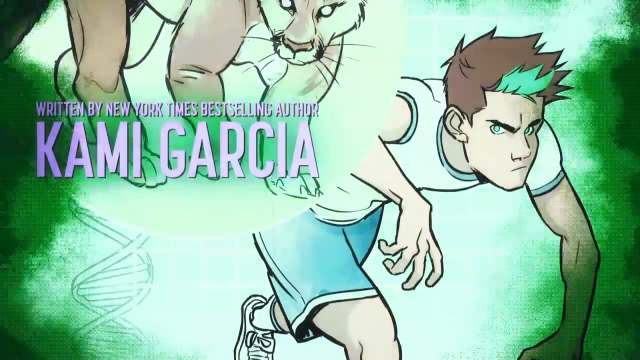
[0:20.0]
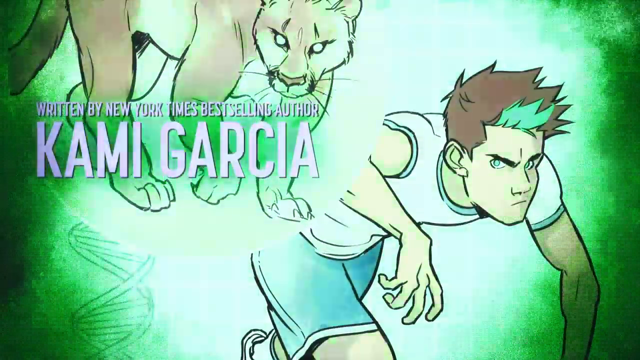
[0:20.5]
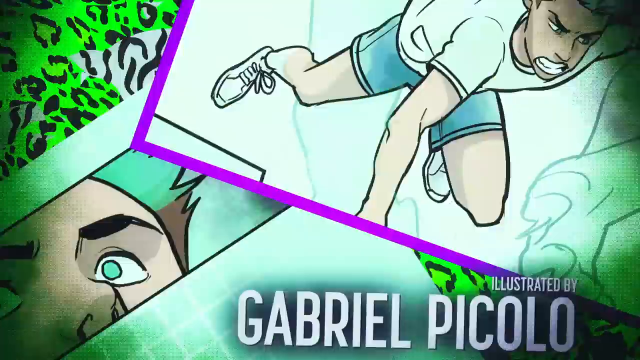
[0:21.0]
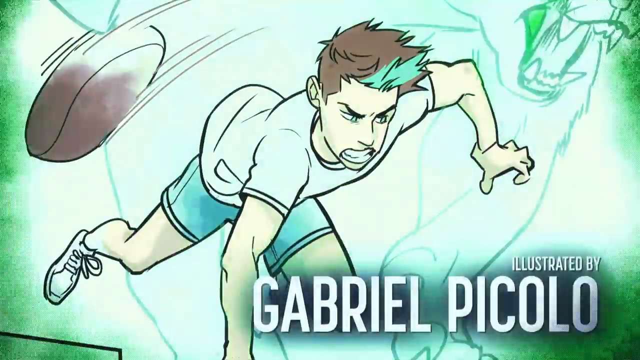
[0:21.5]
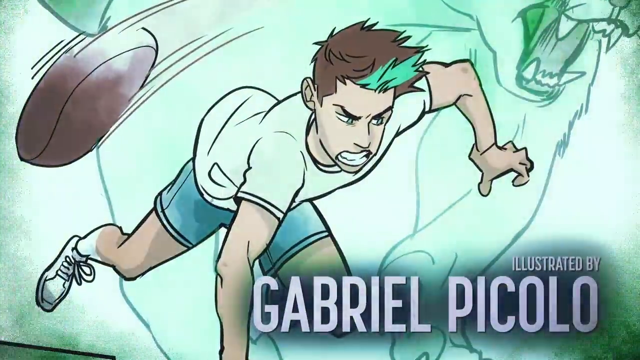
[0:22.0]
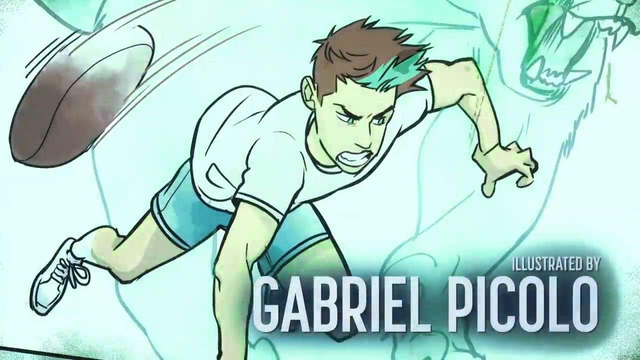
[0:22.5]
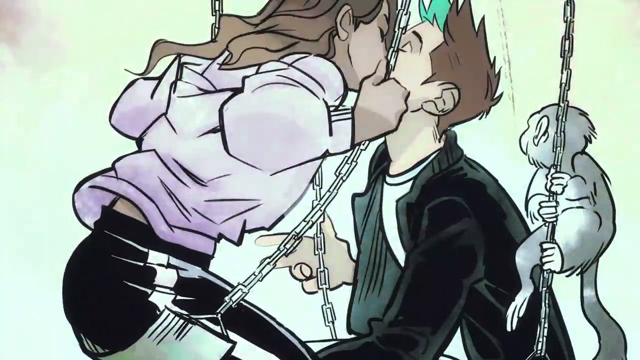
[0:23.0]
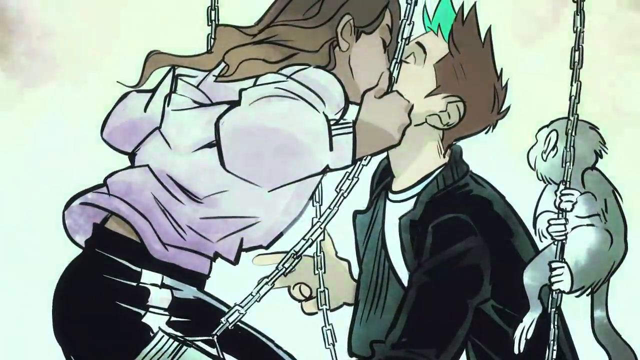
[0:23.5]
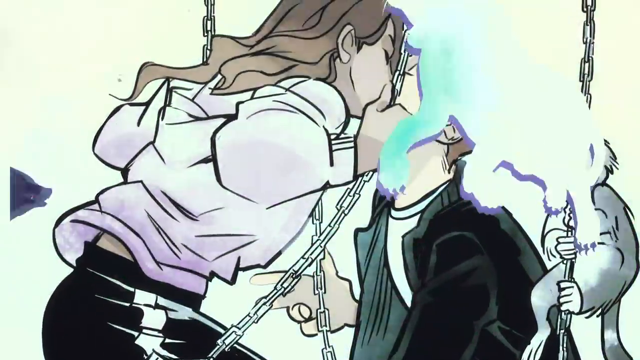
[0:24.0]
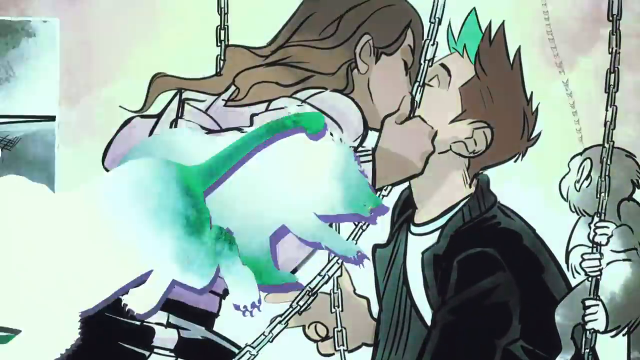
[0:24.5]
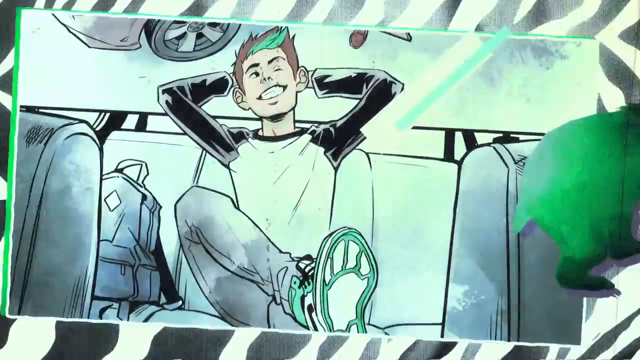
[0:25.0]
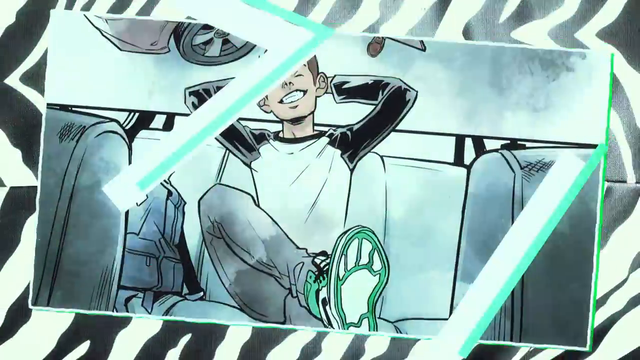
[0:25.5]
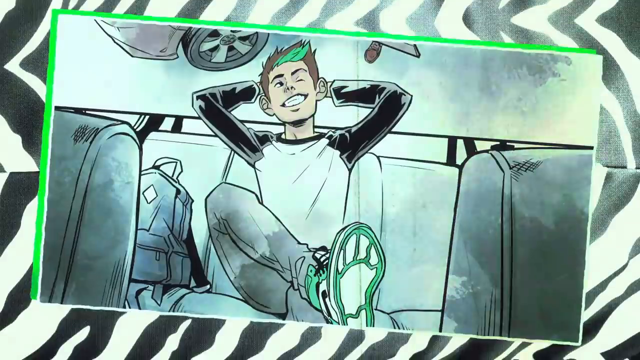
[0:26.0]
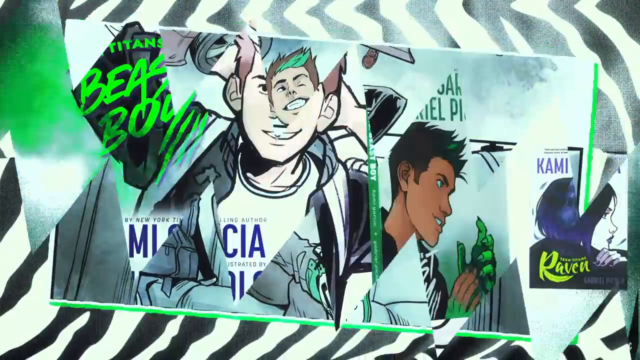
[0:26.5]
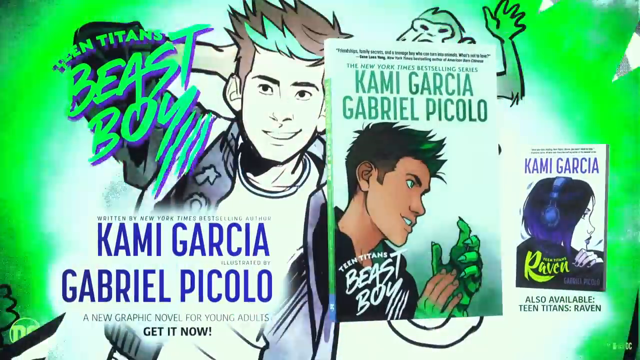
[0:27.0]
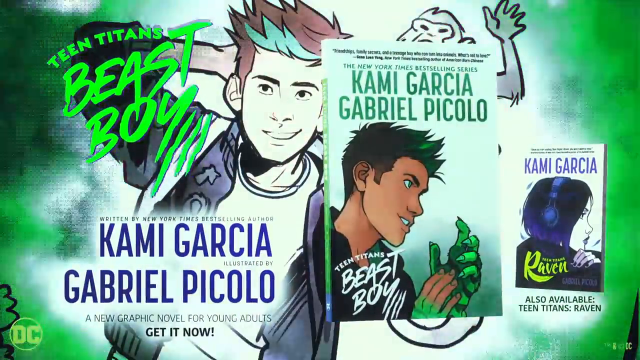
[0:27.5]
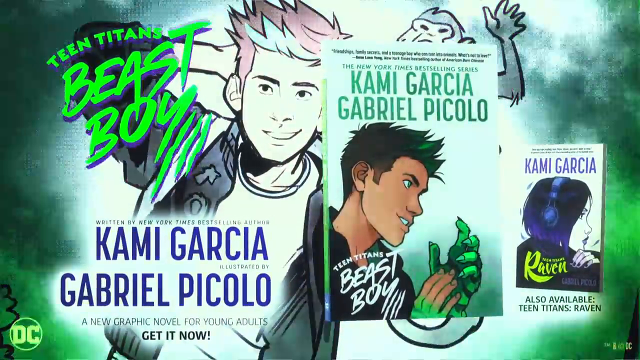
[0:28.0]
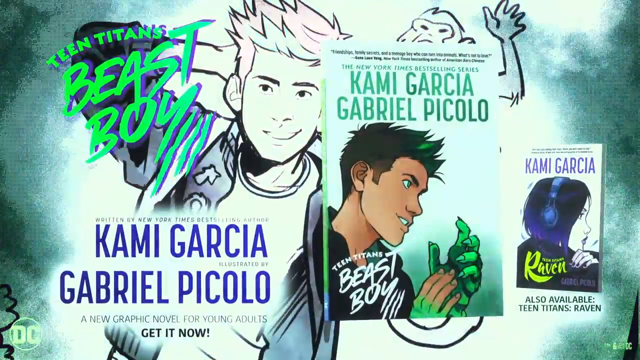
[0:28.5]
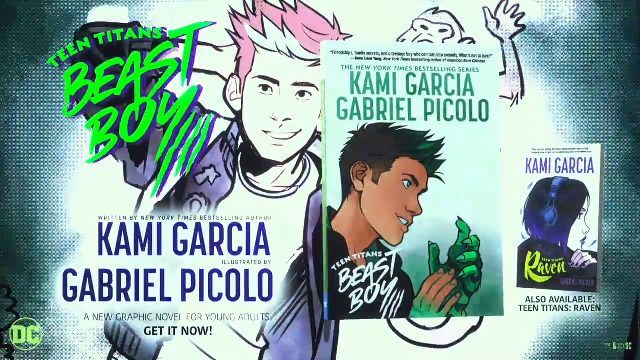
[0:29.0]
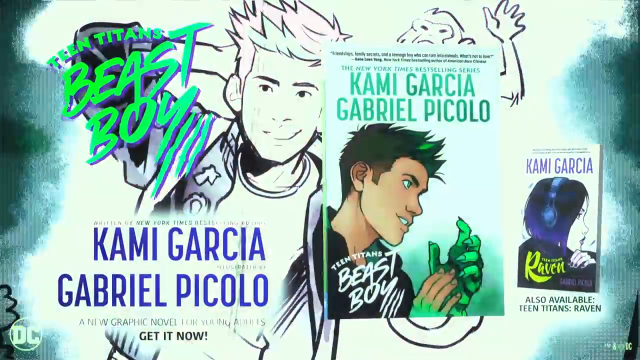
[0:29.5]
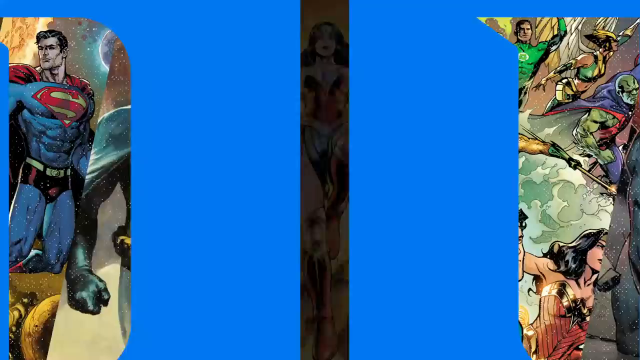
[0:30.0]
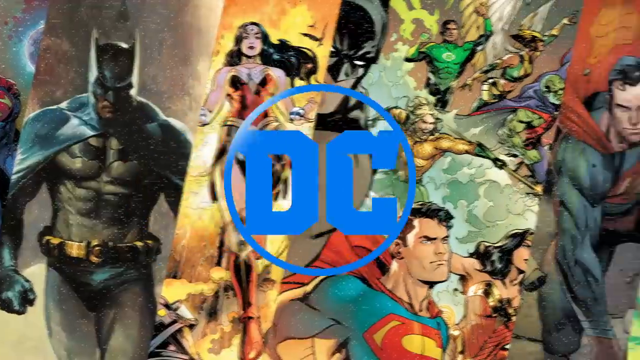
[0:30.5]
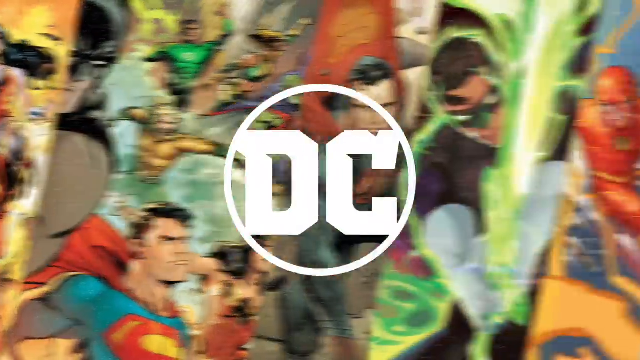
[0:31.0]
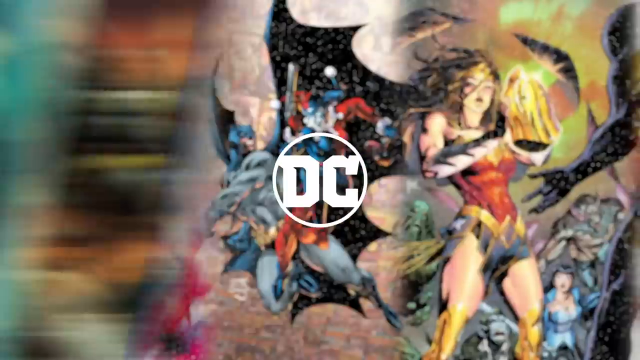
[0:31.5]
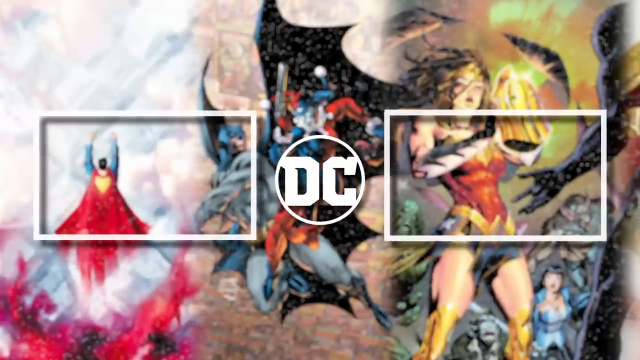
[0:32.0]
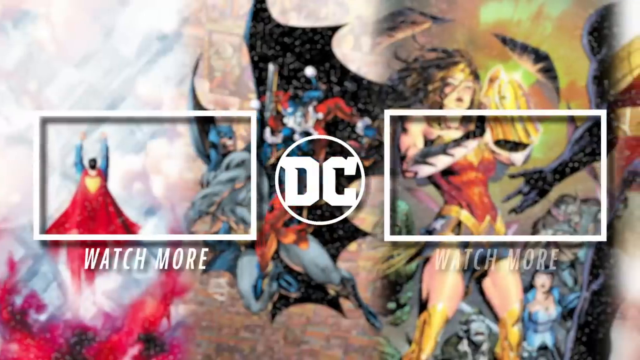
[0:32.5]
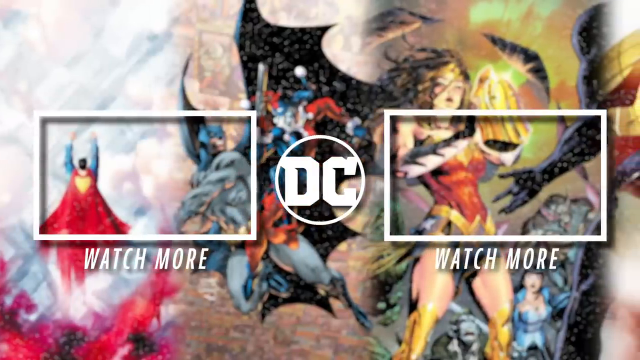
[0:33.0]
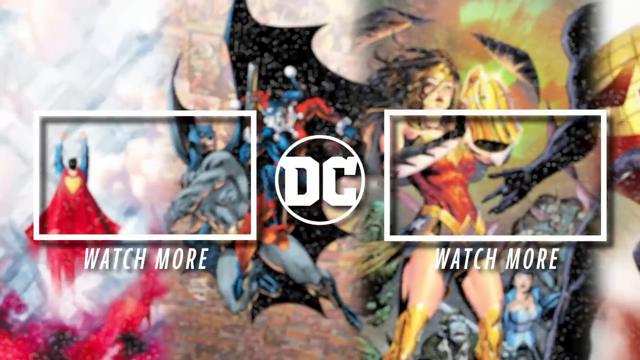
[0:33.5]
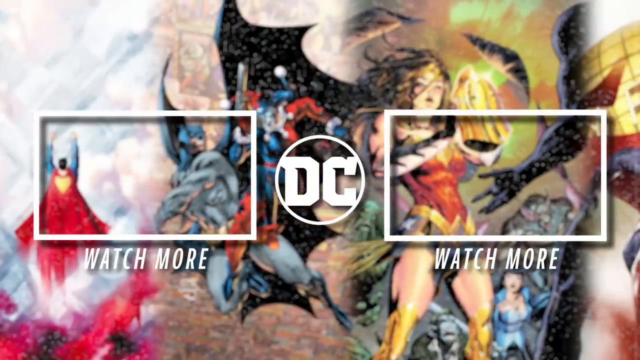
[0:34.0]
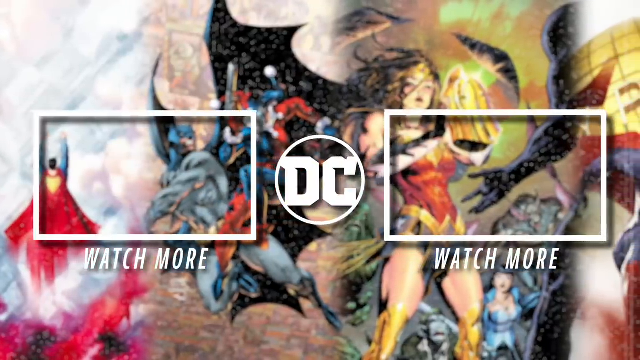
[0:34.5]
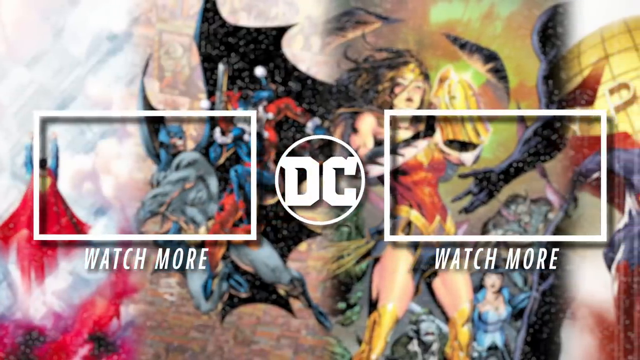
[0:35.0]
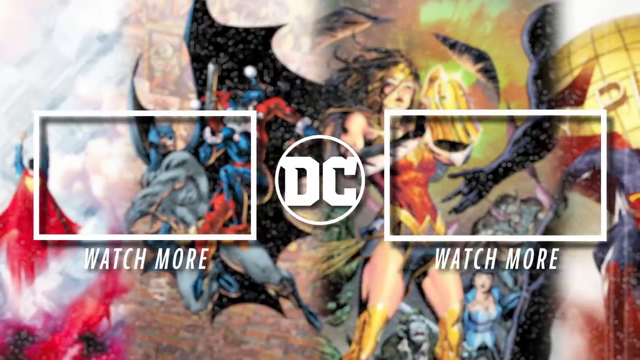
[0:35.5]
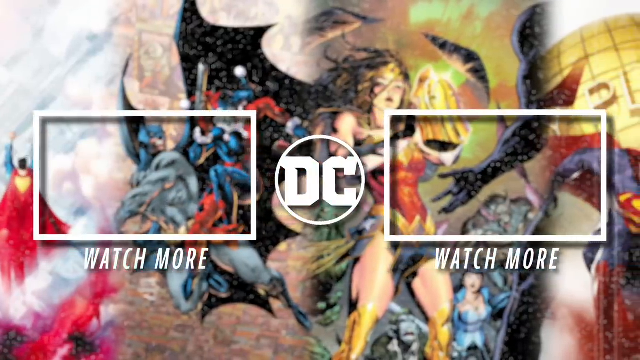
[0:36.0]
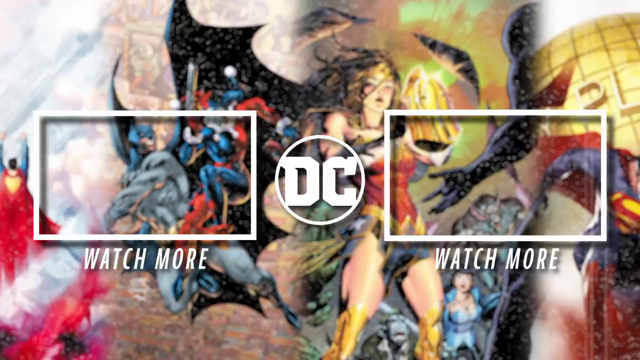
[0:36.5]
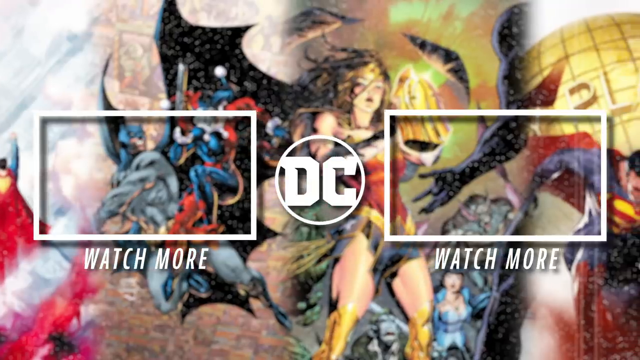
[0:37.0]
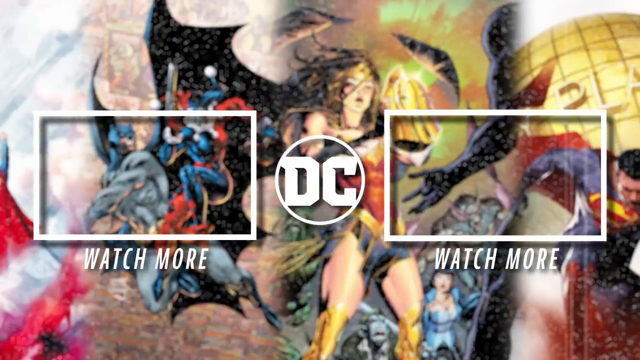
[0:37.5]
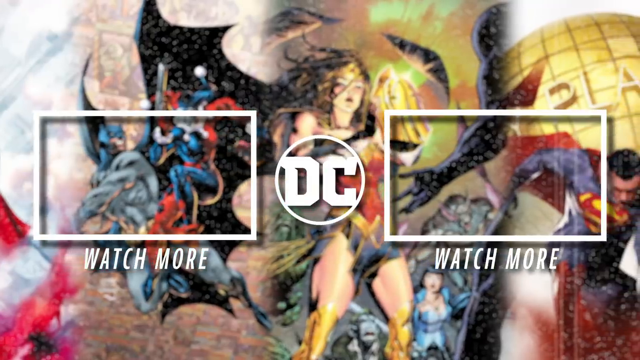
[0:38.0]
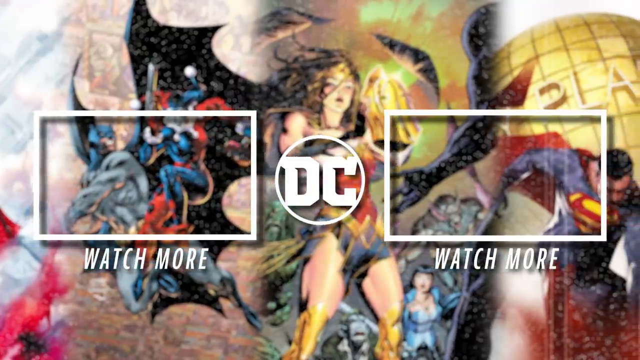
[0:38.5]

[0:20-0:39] Credits appear. One boy is shown with the text "written by New York Times best-selling author Kami Garcia," the name much larger and in all caps. Then a boy appears on the right with a cougar over the top of the name, followed by "illustrated by Gabrielle Piccolo." A boy appears to be running, then a boy and a girl kiss on a swing. Next, a boy sits on a bus or a subway, and in the lower left there appear to be more of the same names on the fronts of books, reading "Beast Boy" and "Teen Titans Beast Boy" a couple of different ways. On the left is a graphic for this program, then a book, then what looks like another book by the same author. A DC Comics graphic follows: a capital D and C in large, bold white letters with a white circle around them, and DC comic characters in the background, including Wonder Woman, Superman and other action heroes. Two rectangles then appear on either side of the DC logo, which is now smaller, and both say "watch more" underneath them in white, all-caps sans-serif font.